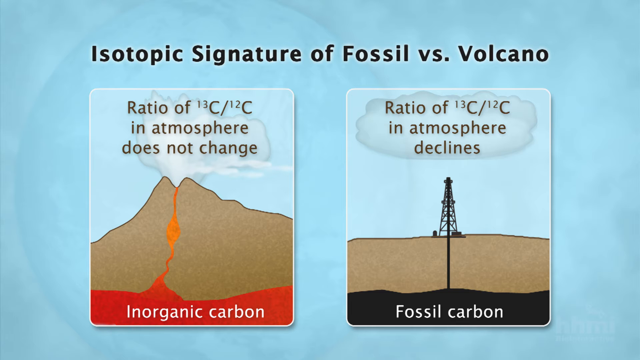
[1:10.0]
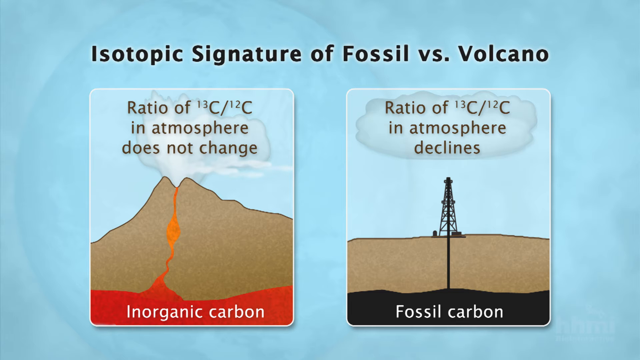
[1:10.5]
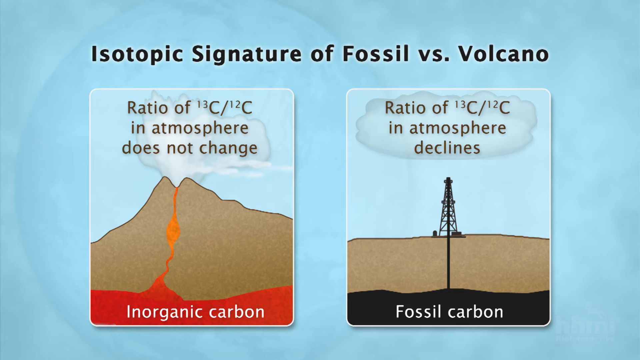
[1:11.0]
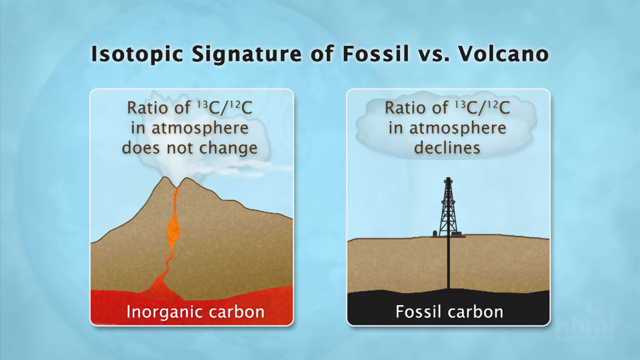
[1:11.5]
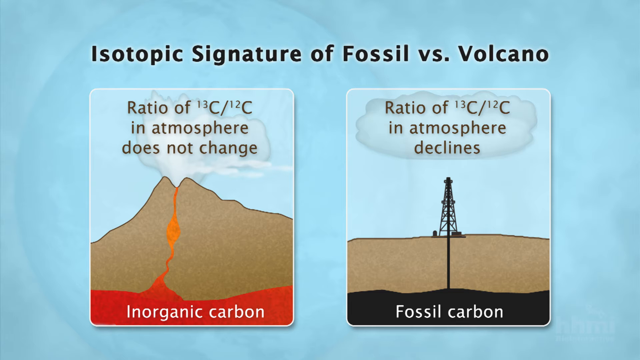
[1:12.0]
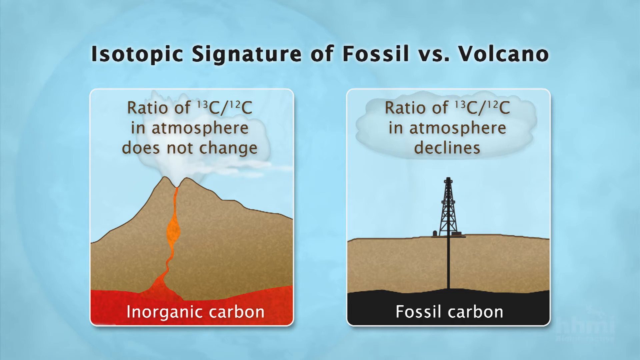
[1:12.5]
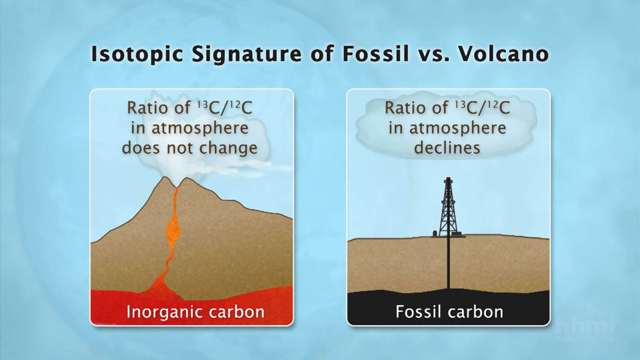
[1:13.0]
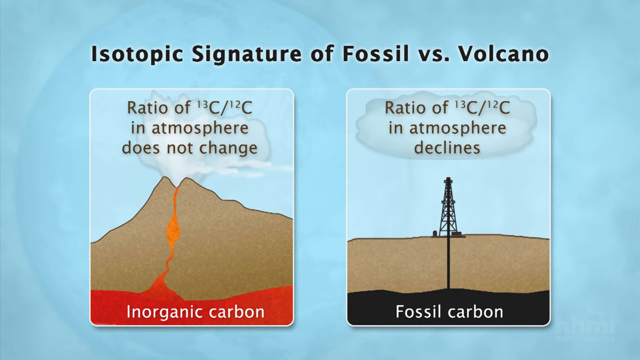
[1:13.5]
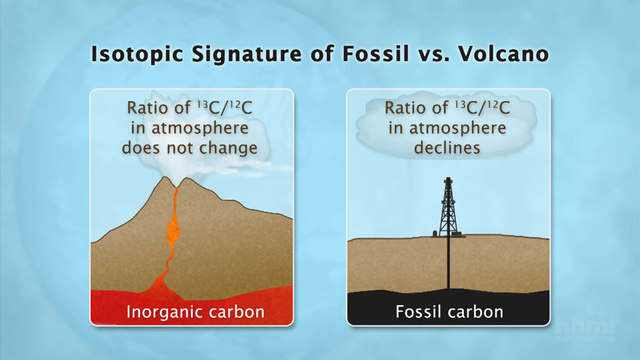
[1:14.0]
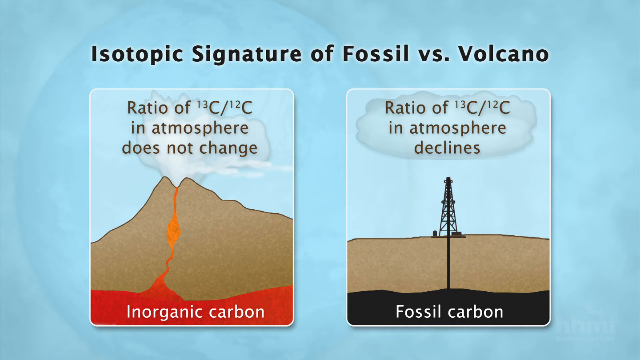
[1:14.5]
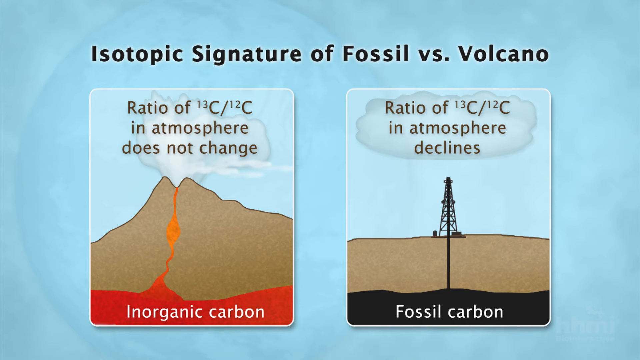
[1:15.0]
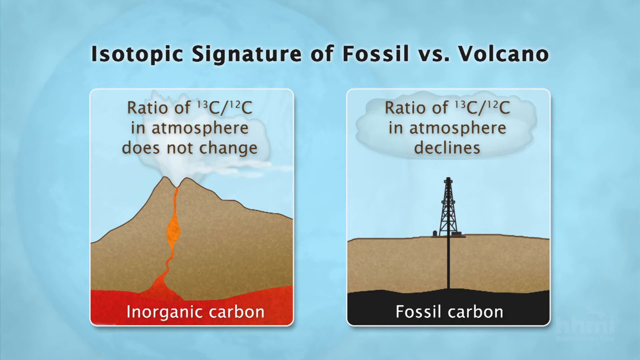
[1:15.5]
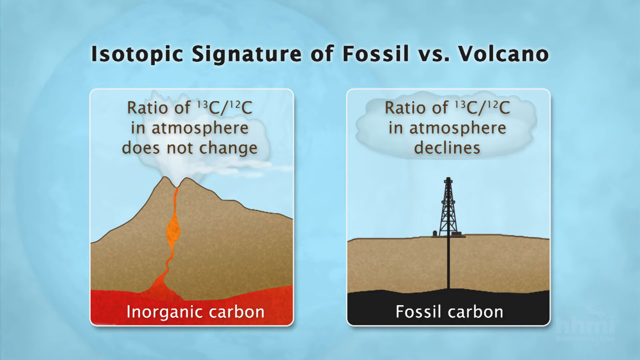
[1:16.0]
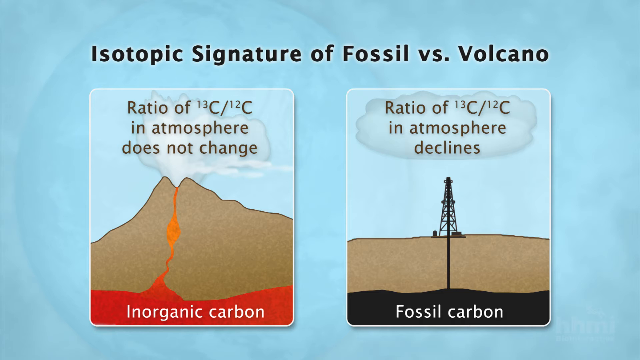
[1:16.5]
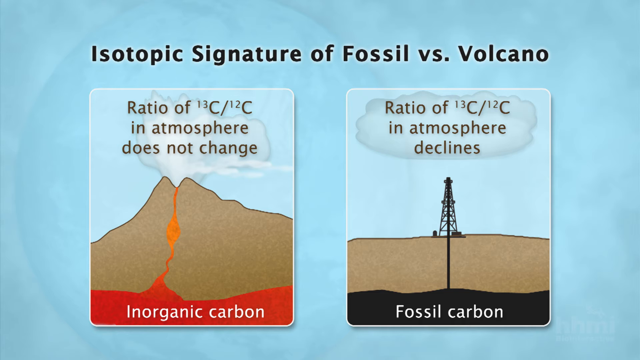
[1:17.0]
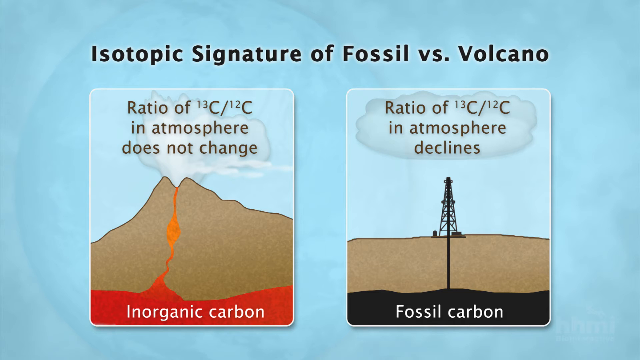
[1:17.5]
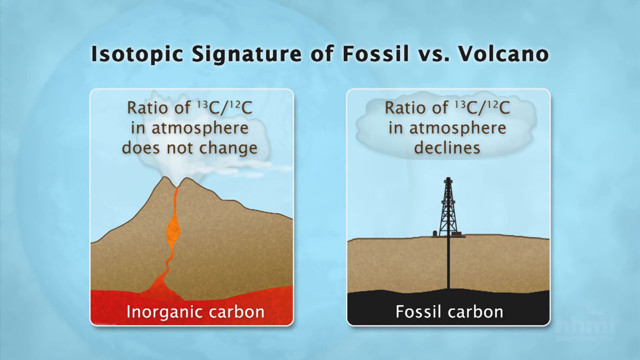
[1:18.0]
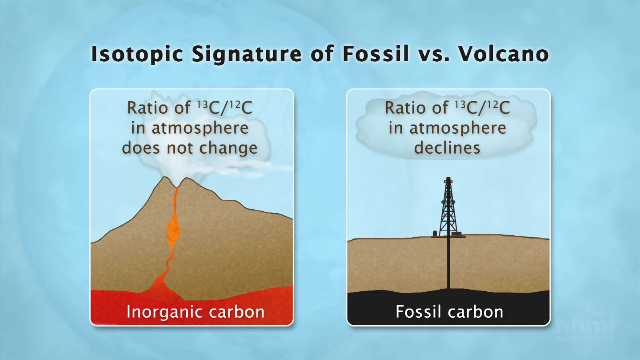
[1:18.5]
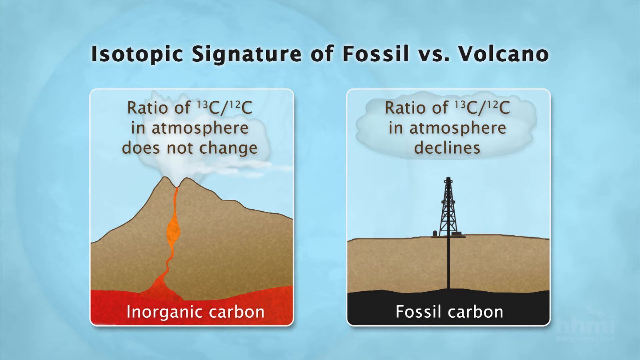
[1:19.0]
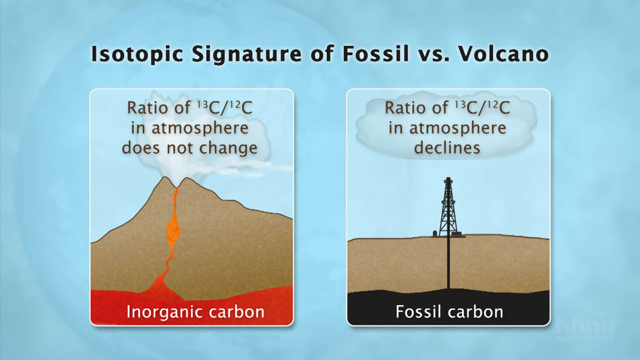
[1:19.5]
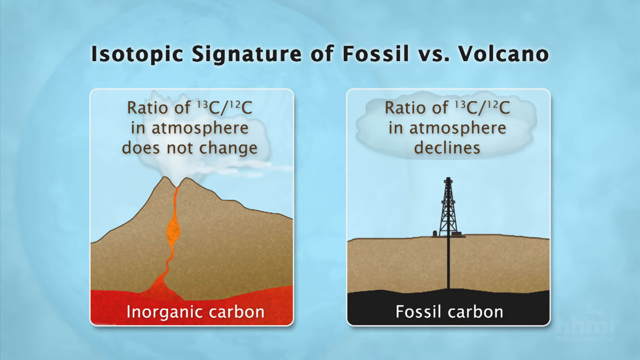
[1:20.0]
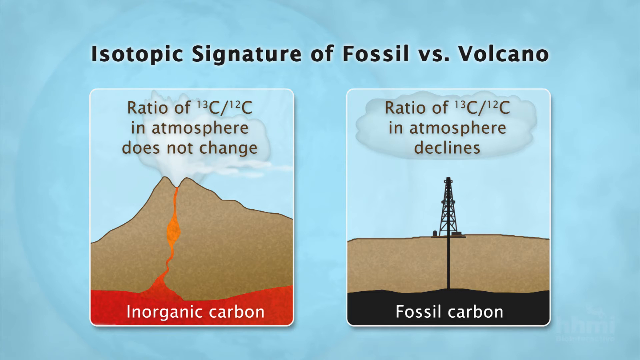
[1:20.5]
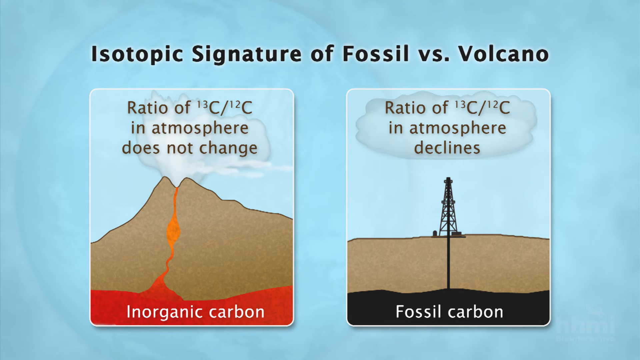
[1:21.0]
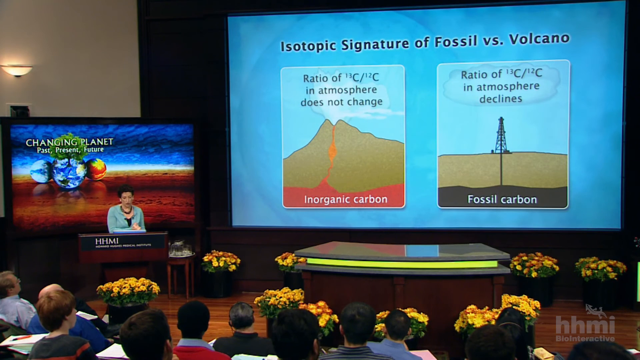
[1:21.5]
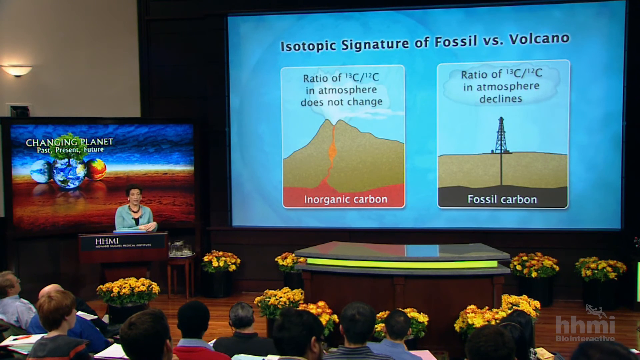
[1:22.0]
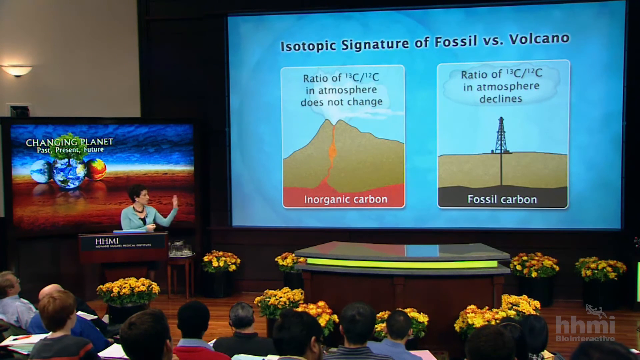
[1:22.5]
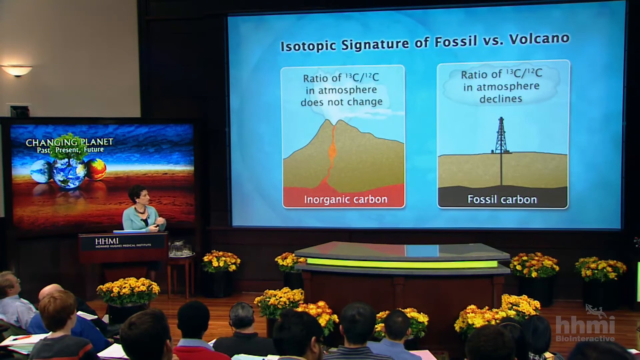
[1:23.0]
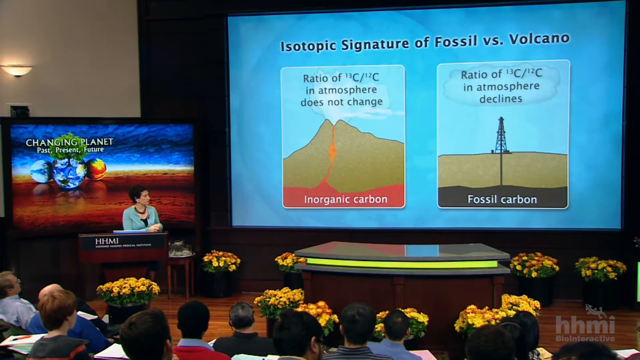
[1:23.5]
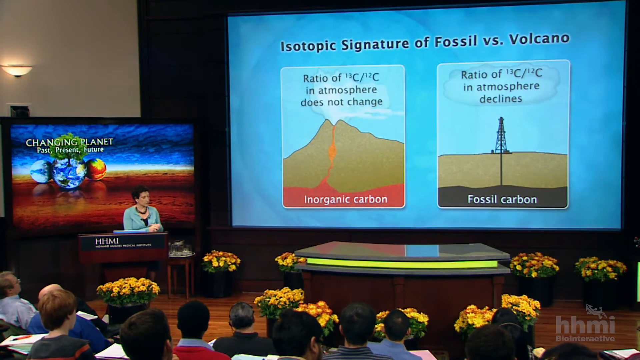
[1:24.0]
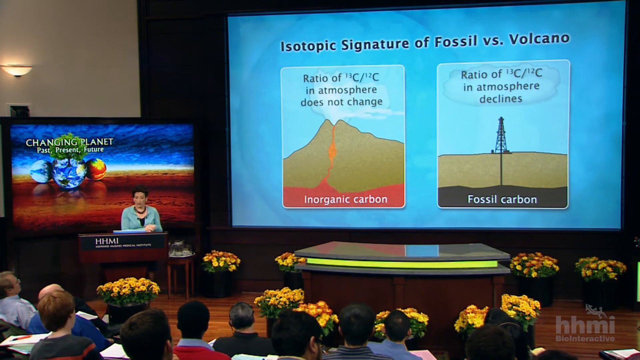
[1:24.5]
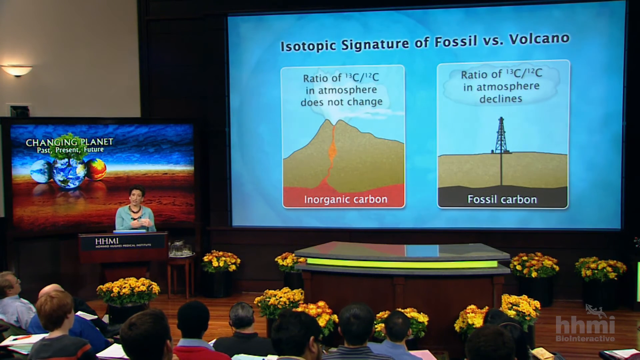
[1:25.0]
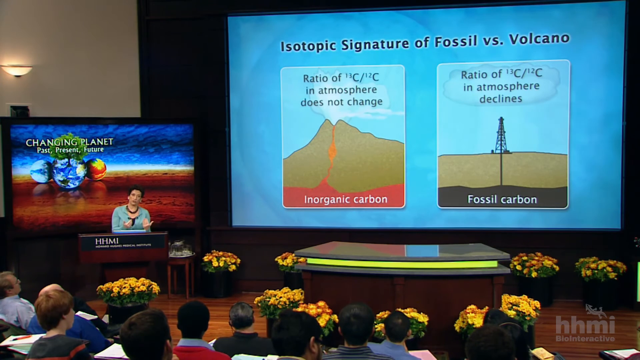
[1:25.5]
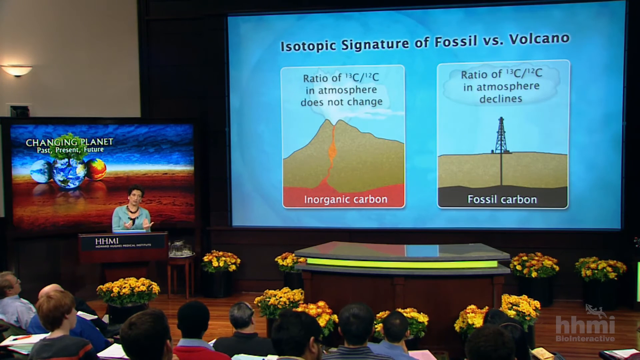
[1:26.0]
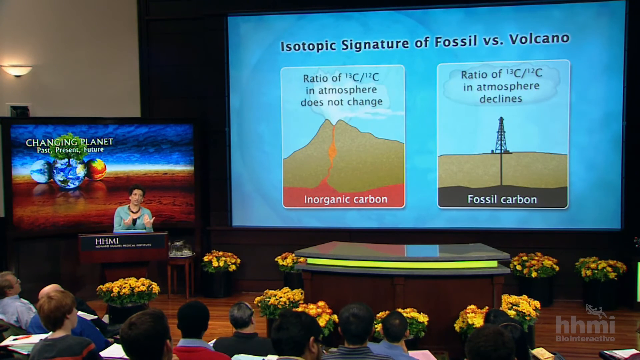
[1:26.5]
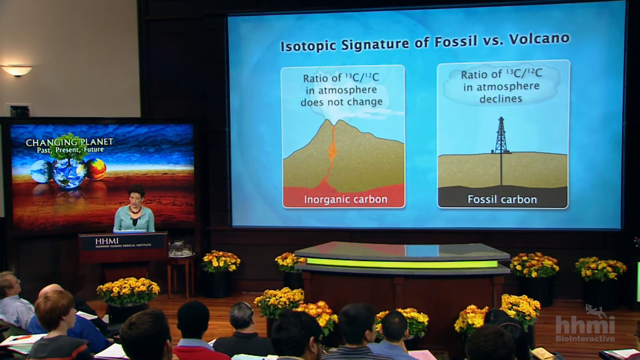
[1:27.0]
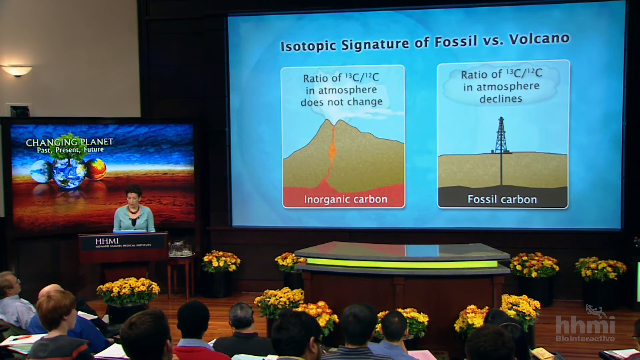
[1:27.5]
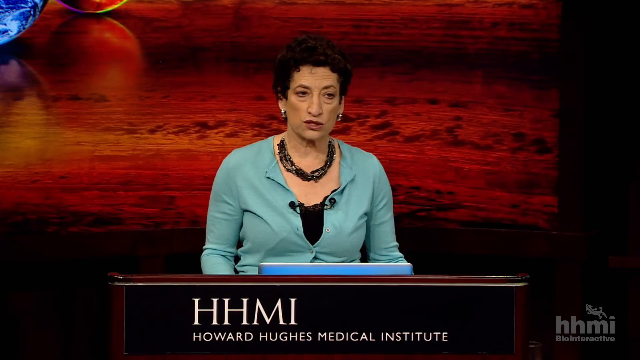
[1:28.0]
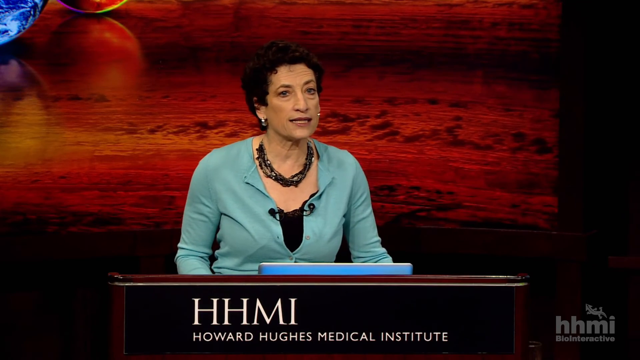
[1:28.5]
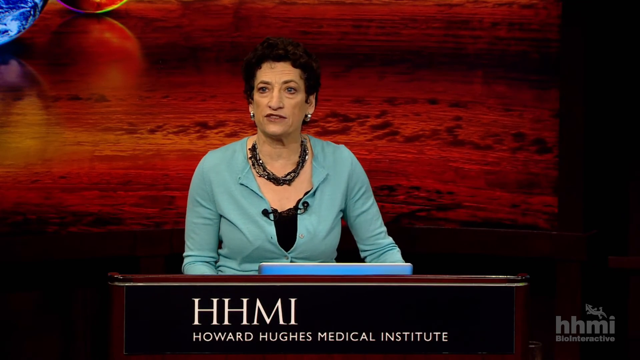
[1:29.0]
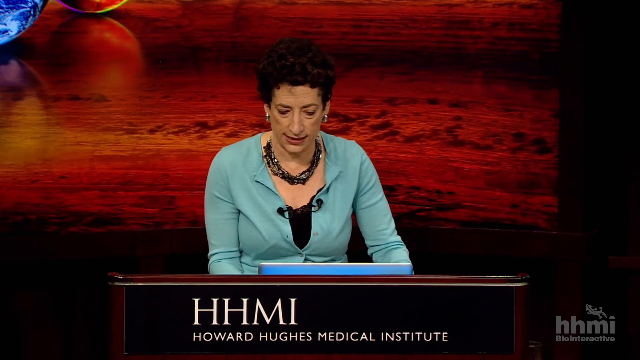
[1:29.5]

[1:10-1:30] On the blue background, a slide is titled "Isotopic signature of fossil vs. volcano." On the left is what looks to be an image of a volcano; it is illustrated and does not look photographic. At the top of the volcano image it says "ratio of 13C/12C in atmosphere does not change," and at the very bottom of the volcano it says "inorganic carbon." On the right is an image of an oil well, with the text "ratio of 13C/12C in atmosphere declines," and at the very bottom of the oil well illustration it says "fossil carbon." The image then changes to a view from much farther away, showing the woman speaking at the podium with the slideshow off to her side.